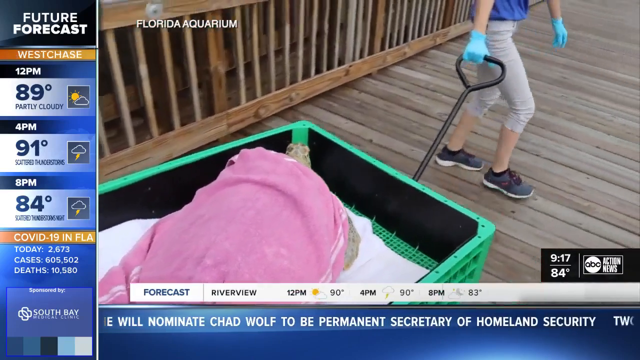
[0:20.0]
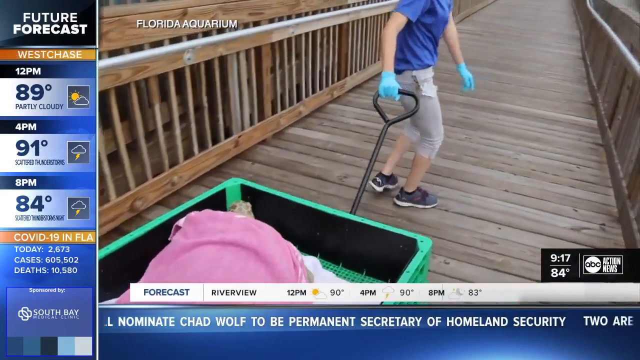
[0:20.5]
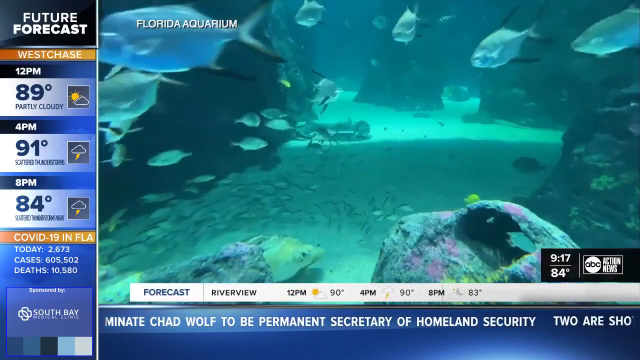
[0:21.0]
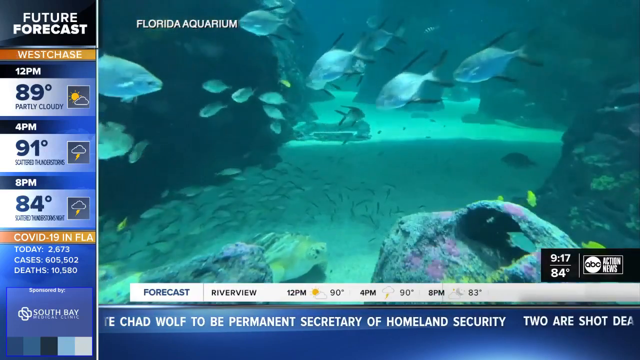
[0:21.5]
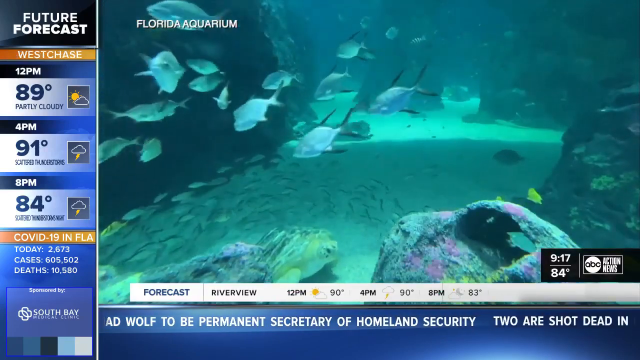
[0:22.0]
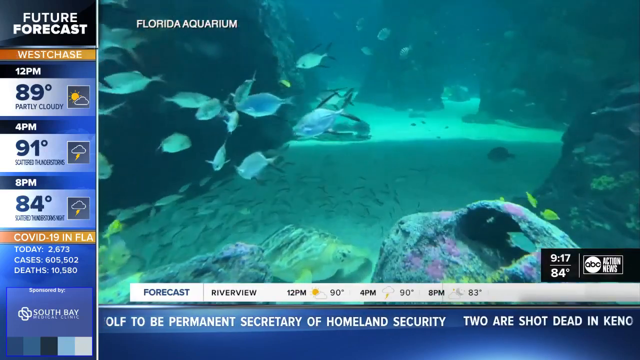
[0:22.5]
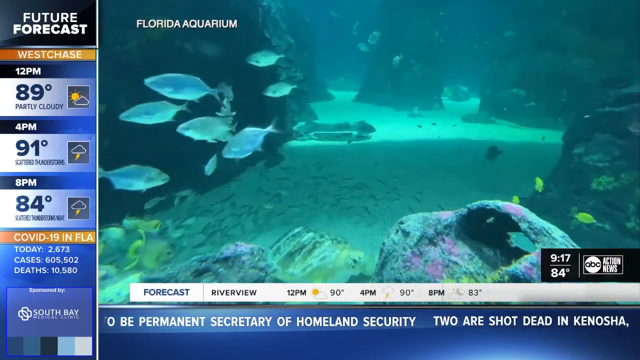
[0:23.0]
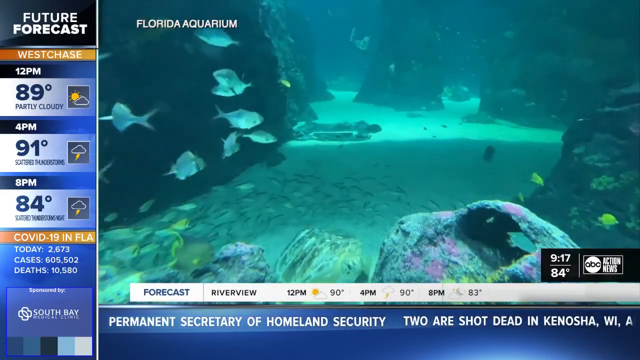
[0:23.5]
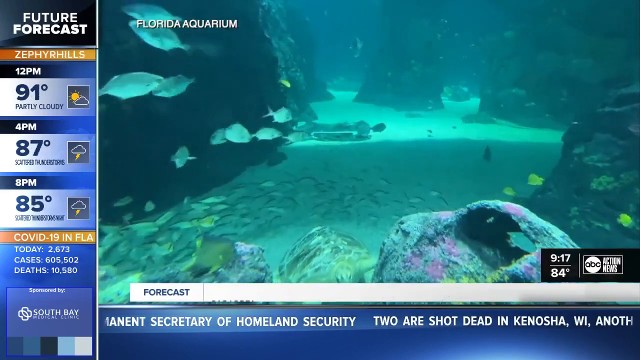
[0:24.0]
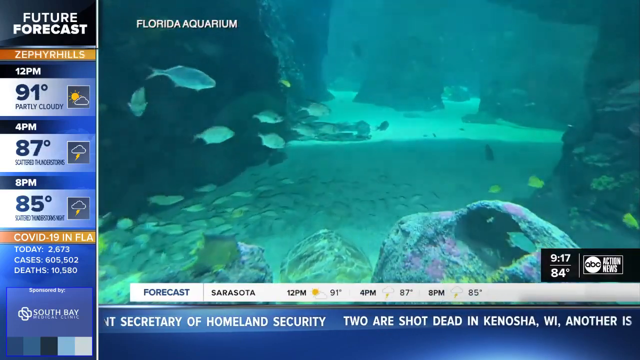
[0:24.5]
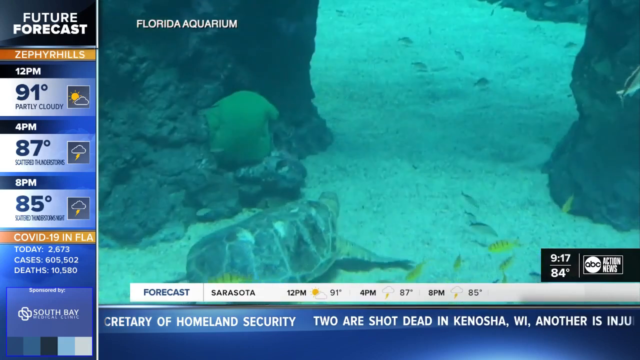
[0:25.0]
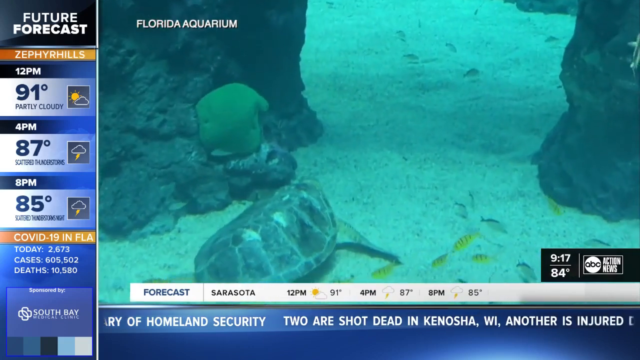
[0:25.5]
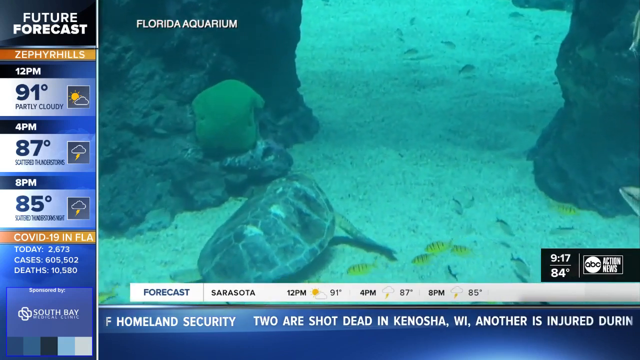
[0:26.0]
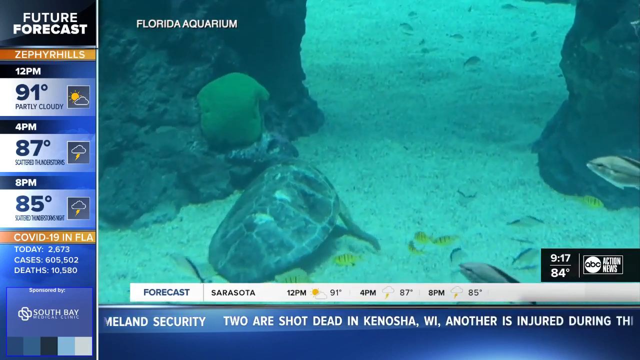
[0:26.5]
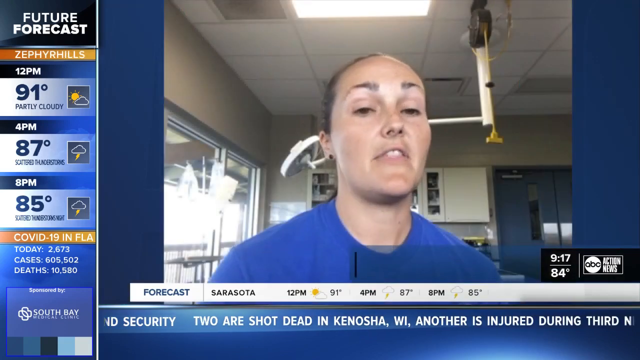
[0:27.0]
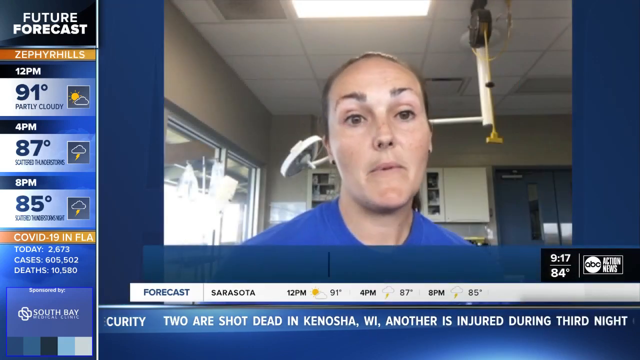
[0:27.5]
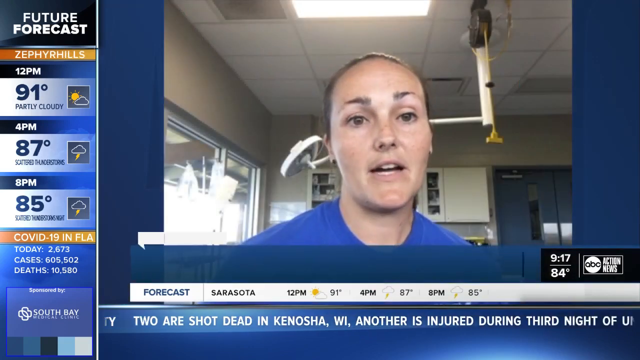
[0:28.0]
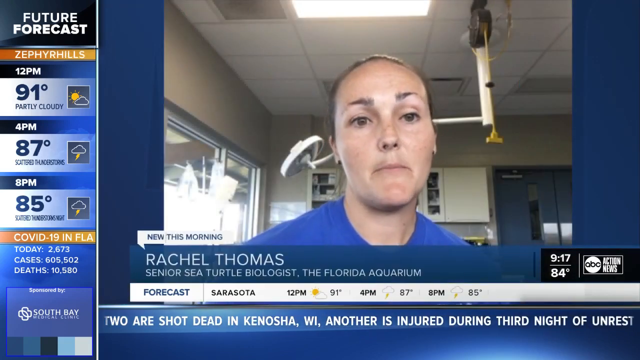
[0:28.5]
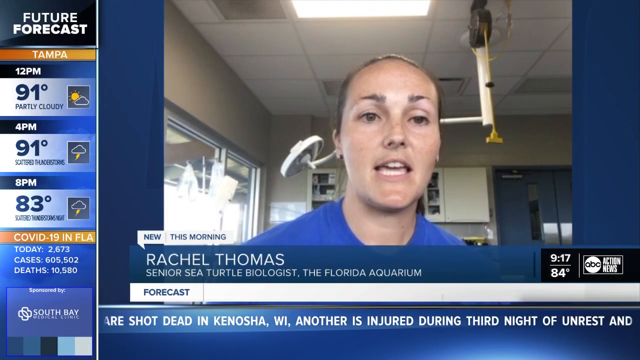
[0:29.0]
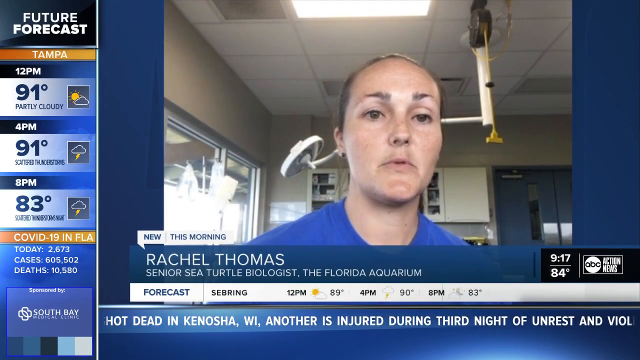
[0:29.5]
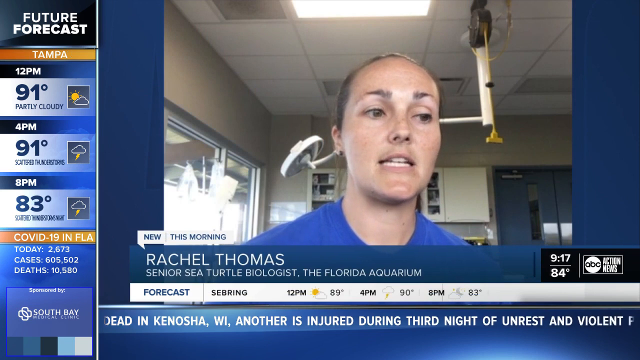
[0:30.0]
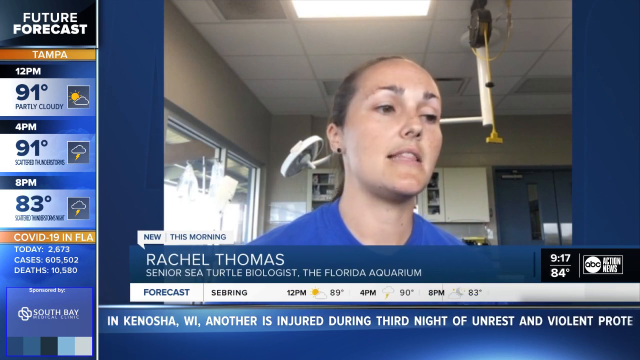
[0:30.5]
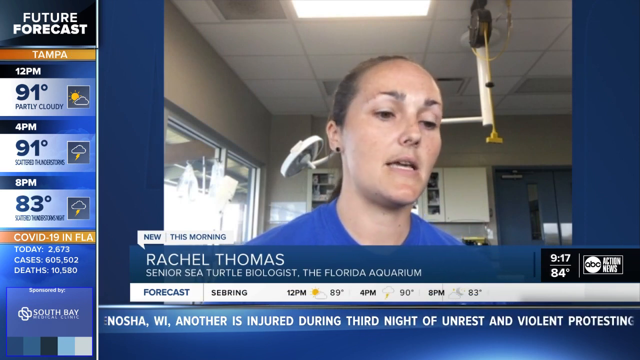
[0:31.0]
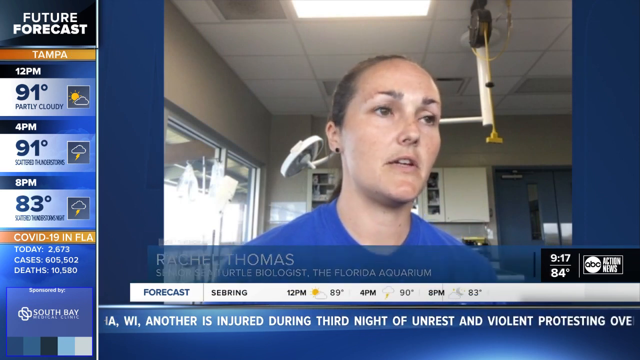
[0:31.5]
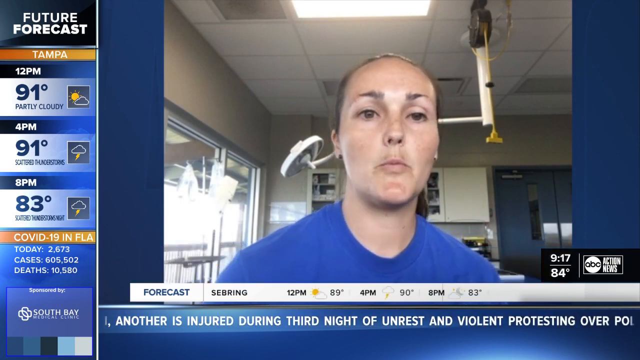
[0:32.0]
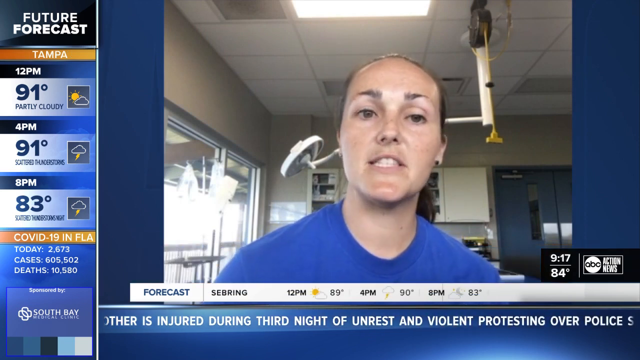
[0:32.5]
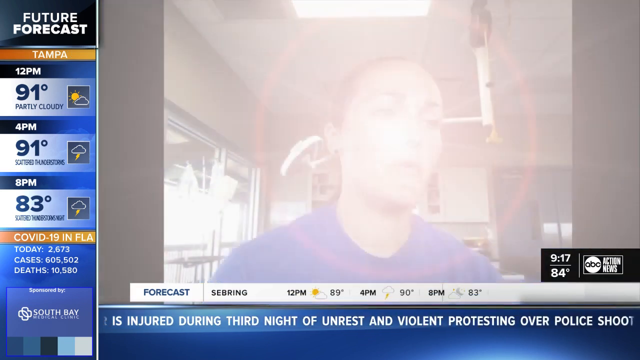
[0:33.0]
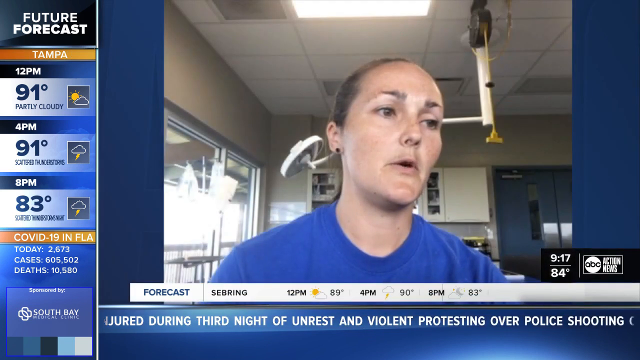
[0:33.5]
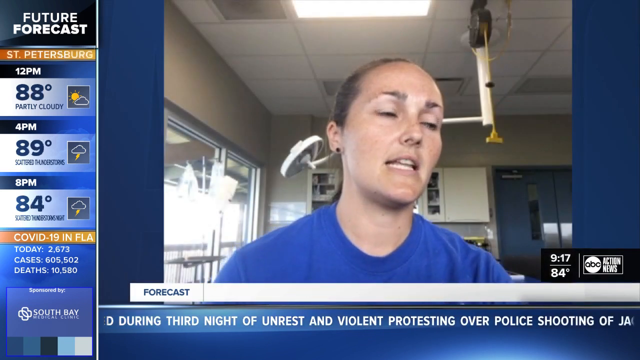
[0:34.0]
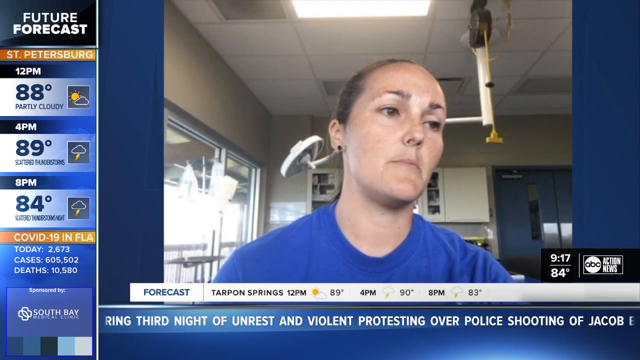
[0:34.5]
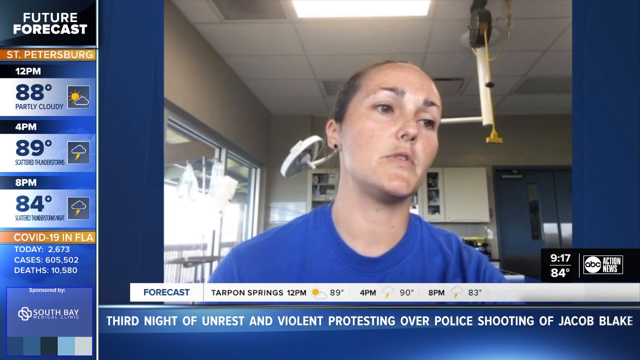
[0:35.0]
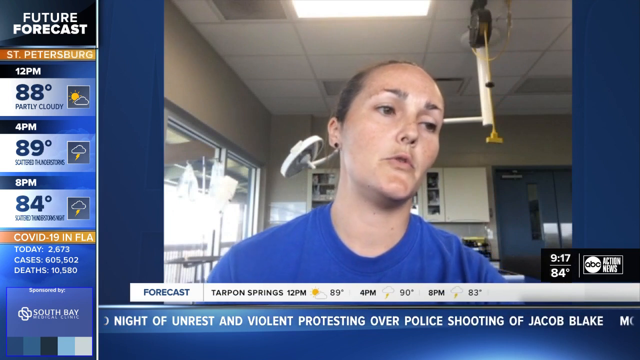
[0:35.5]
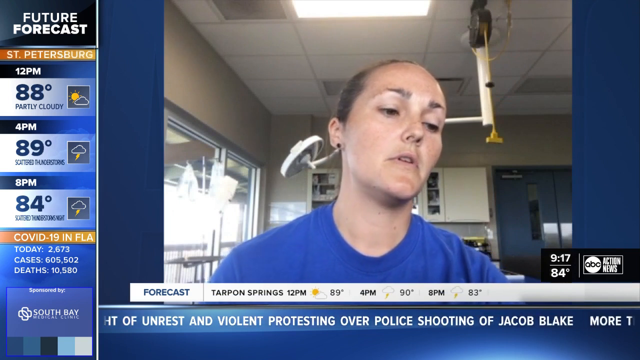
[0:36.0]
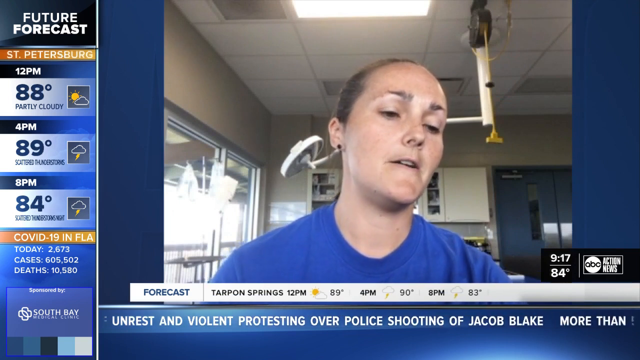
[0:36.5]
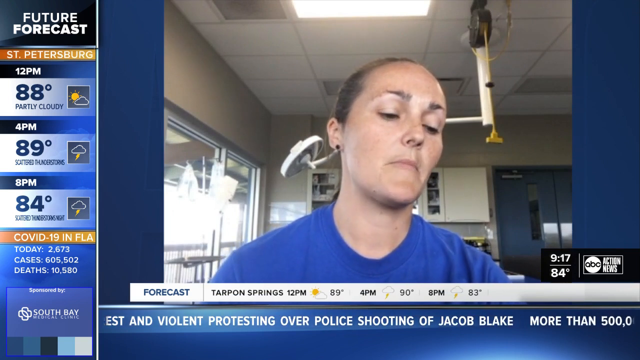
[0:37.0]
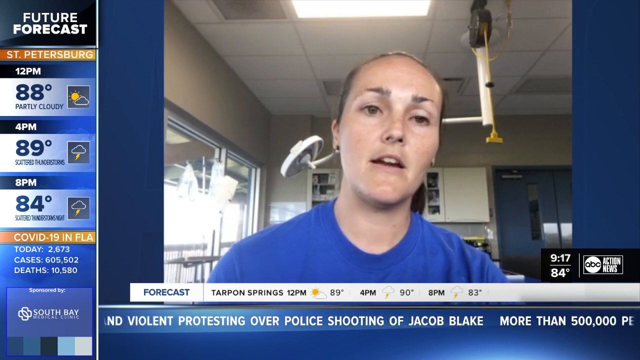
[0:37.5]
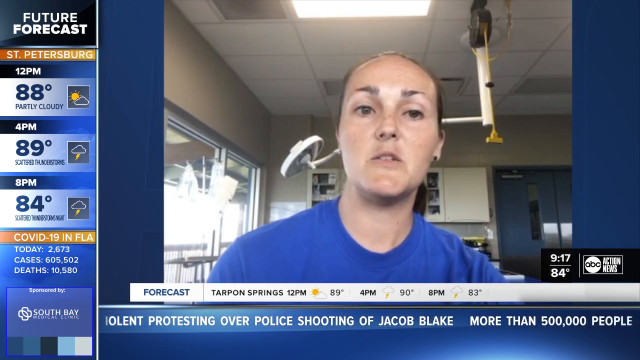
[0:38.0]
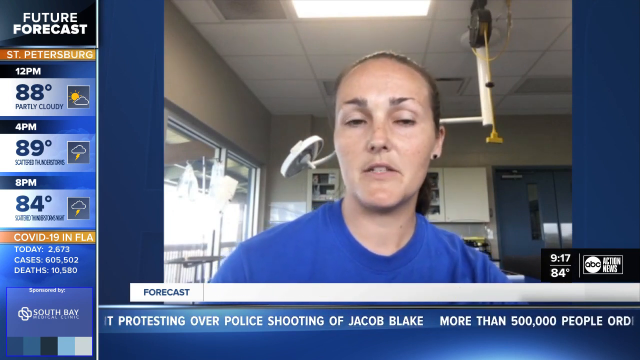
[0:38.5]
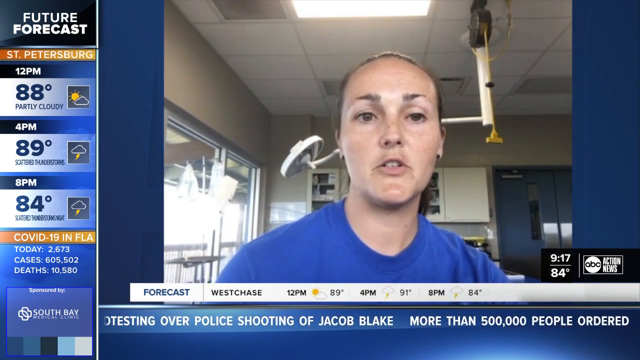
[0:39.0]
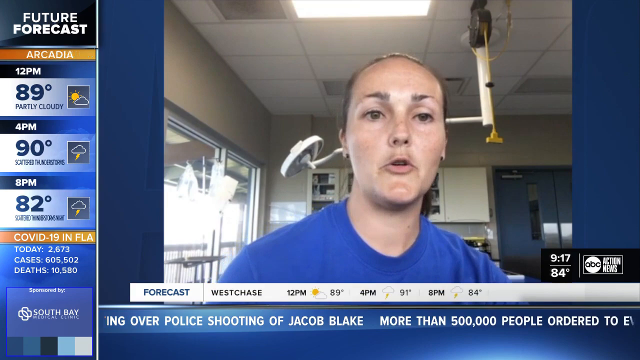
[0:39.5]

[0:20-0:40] Images and video footage show turtles being transported and turtles in the aquarium tank. Rachel Thomas, the senior sea turtle biologist at the aquarium, is seen speaking.